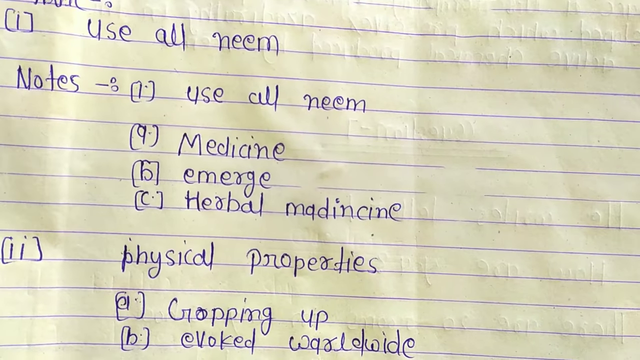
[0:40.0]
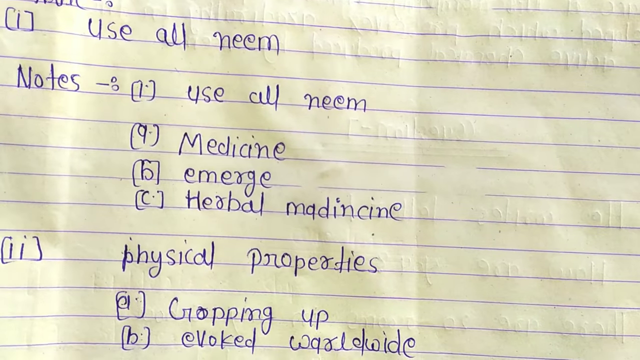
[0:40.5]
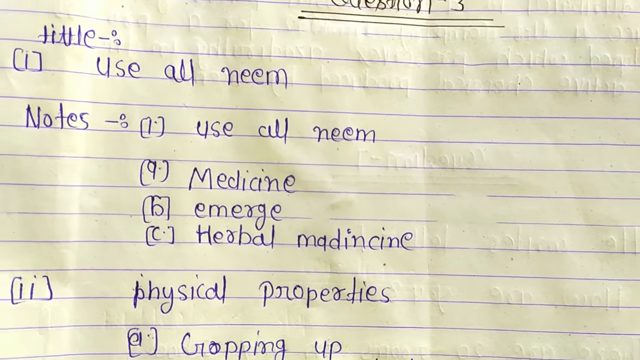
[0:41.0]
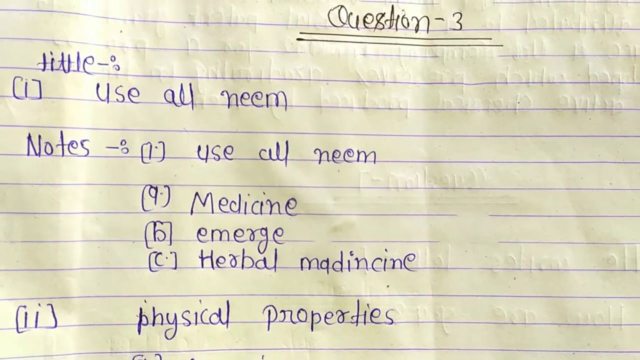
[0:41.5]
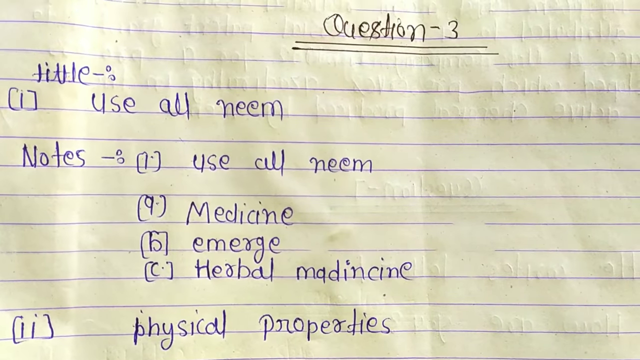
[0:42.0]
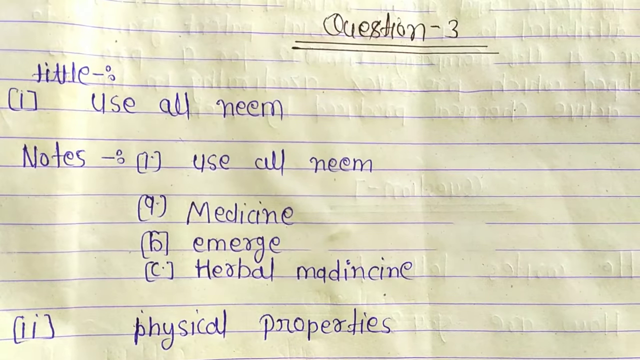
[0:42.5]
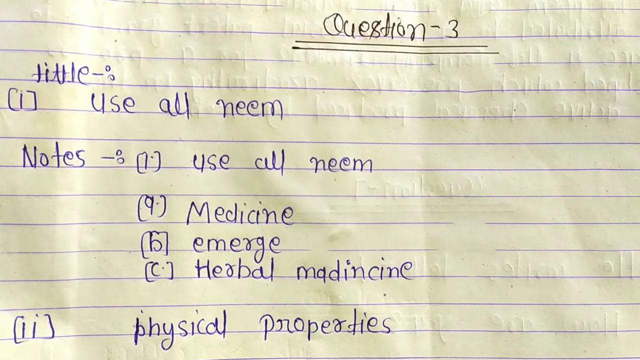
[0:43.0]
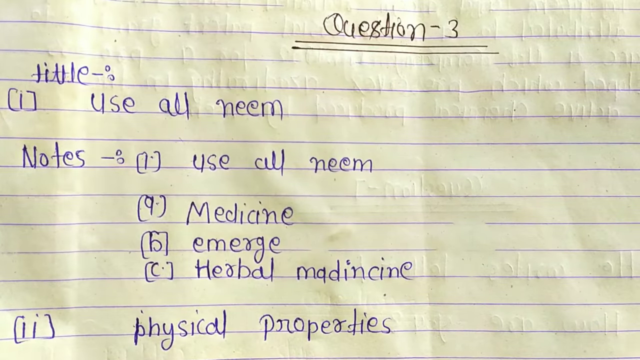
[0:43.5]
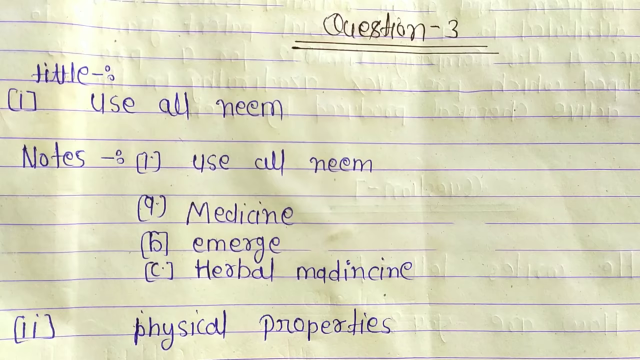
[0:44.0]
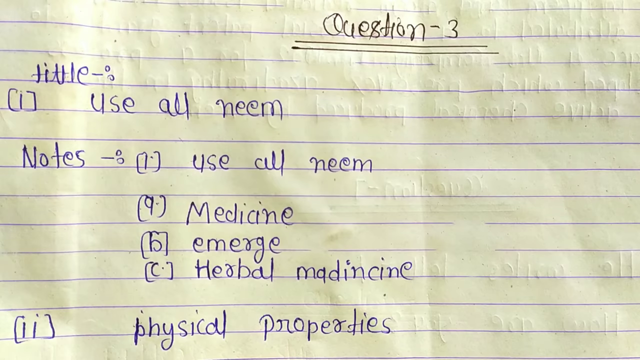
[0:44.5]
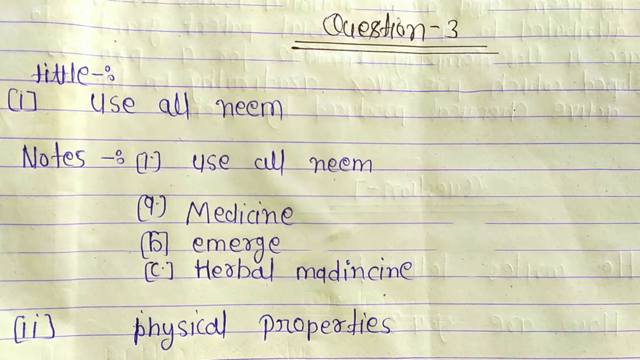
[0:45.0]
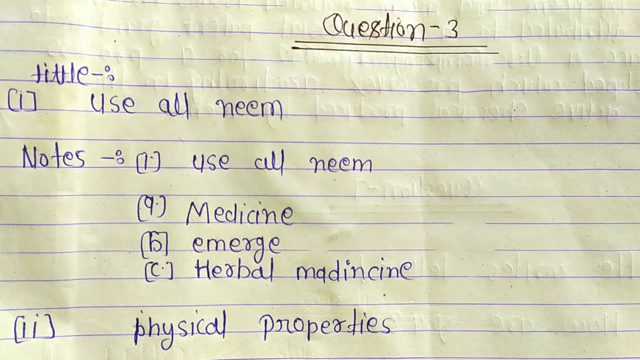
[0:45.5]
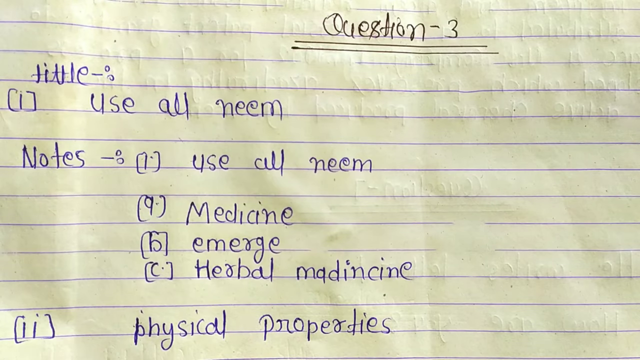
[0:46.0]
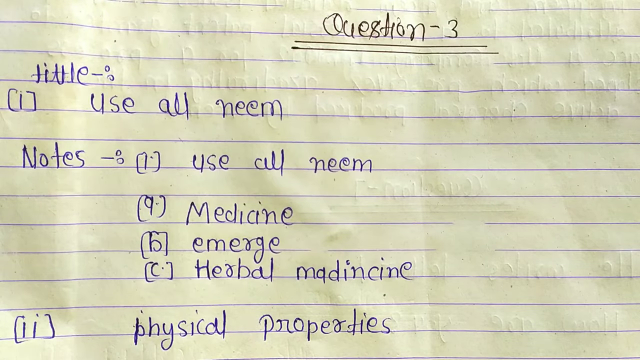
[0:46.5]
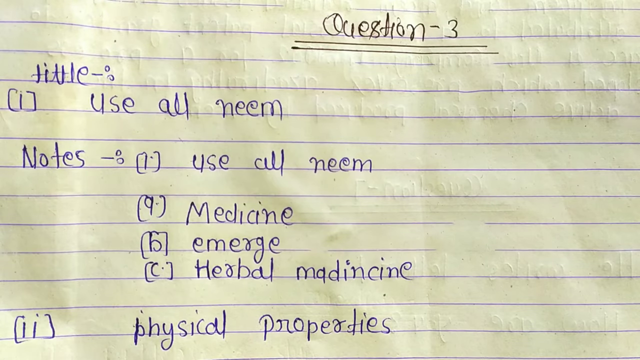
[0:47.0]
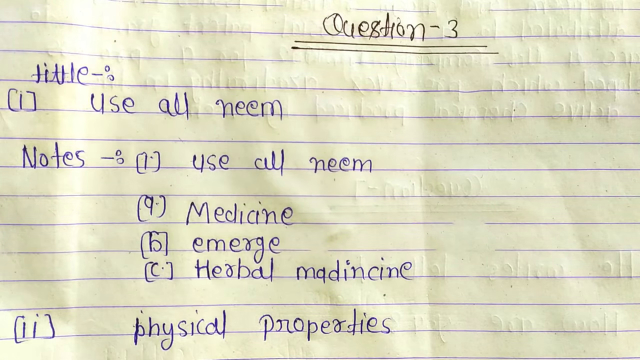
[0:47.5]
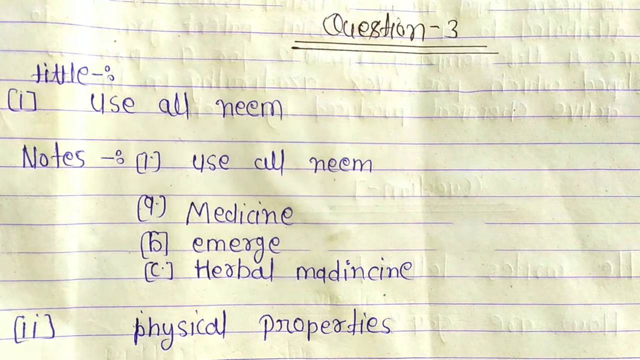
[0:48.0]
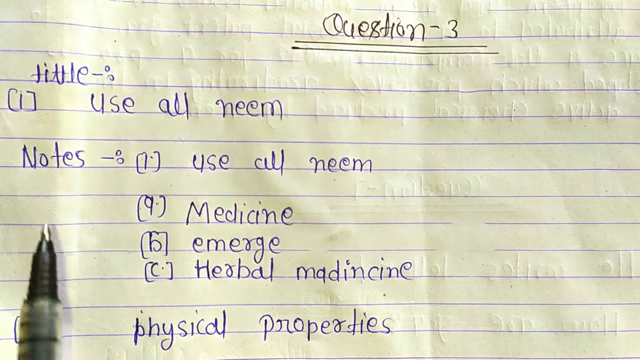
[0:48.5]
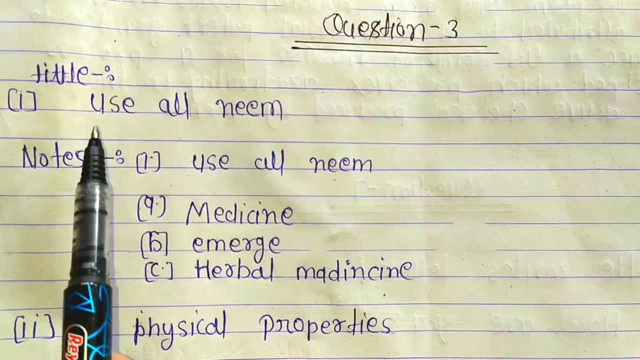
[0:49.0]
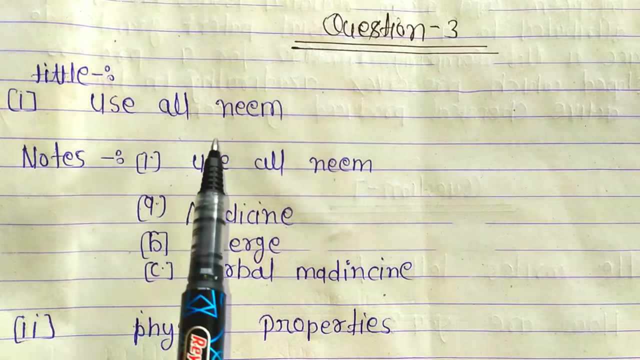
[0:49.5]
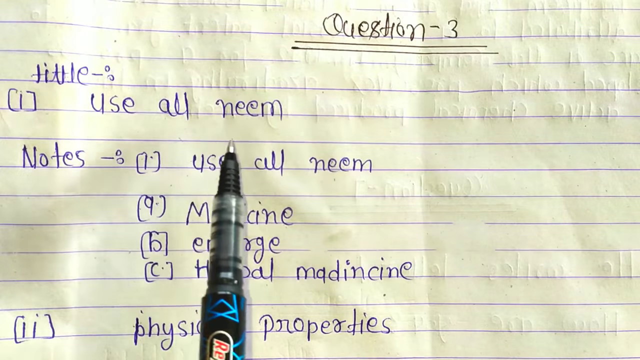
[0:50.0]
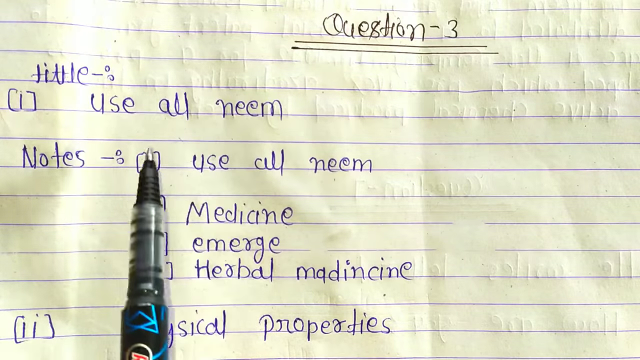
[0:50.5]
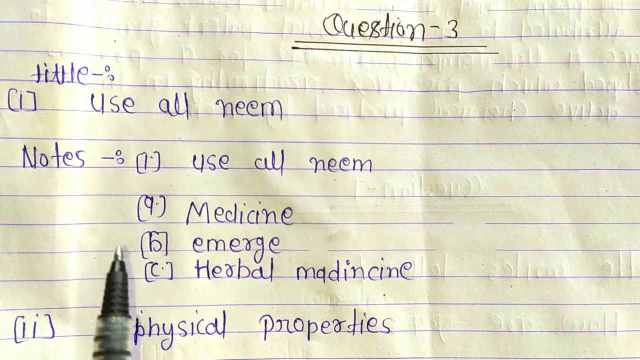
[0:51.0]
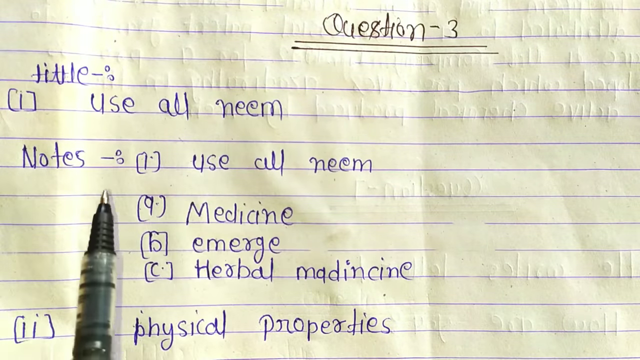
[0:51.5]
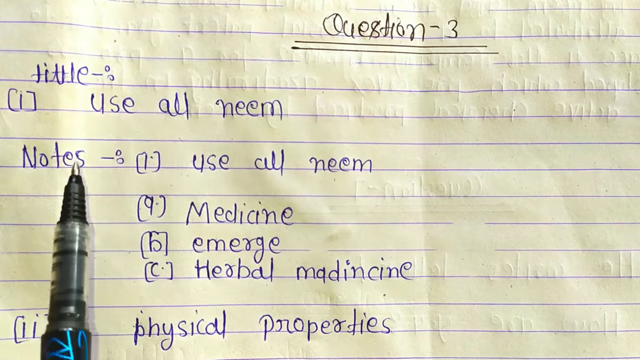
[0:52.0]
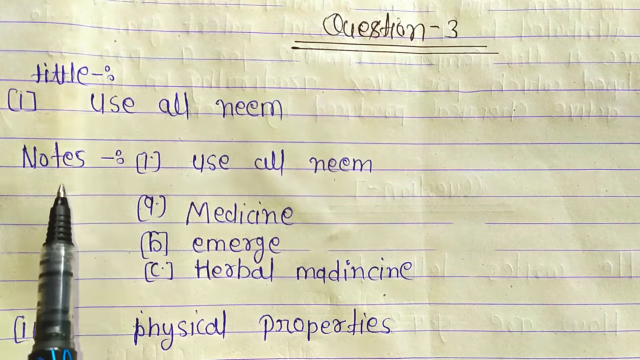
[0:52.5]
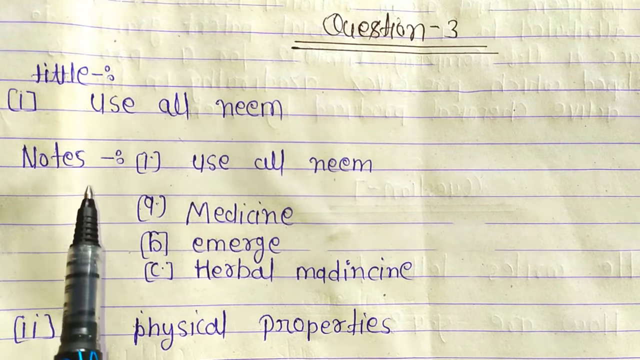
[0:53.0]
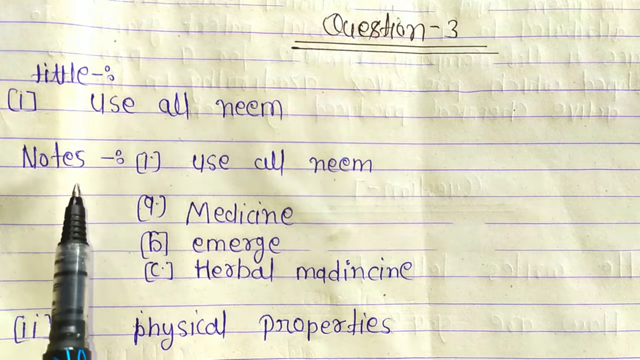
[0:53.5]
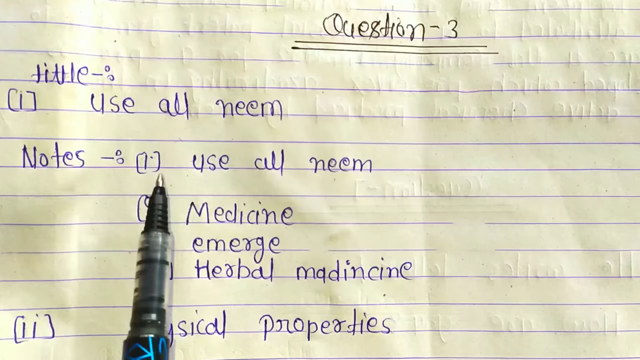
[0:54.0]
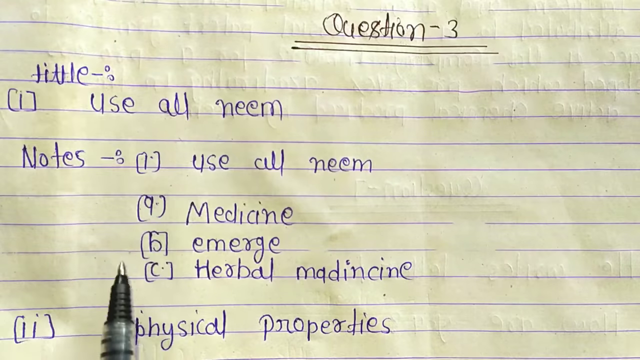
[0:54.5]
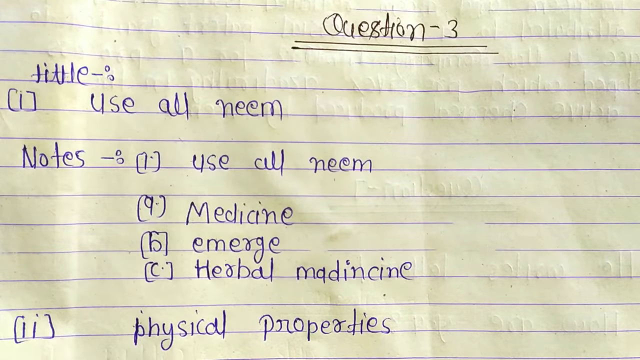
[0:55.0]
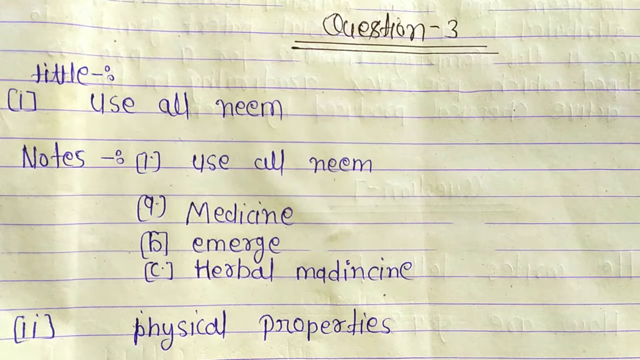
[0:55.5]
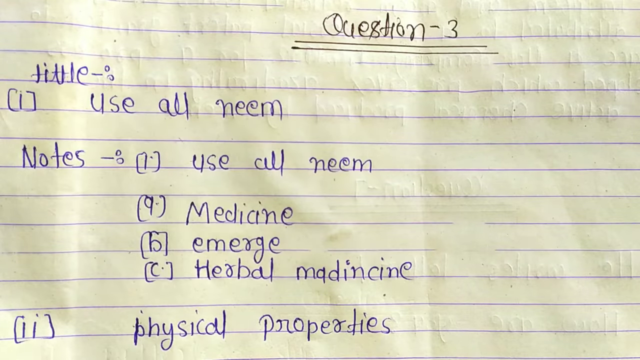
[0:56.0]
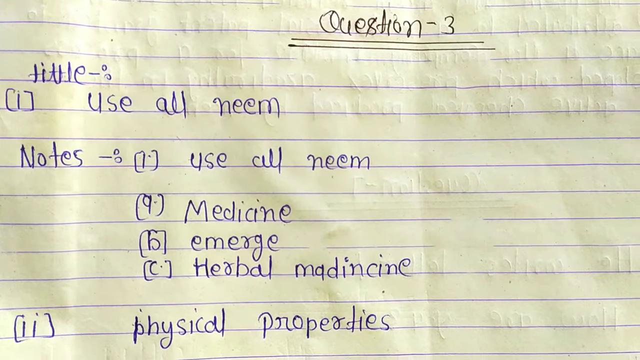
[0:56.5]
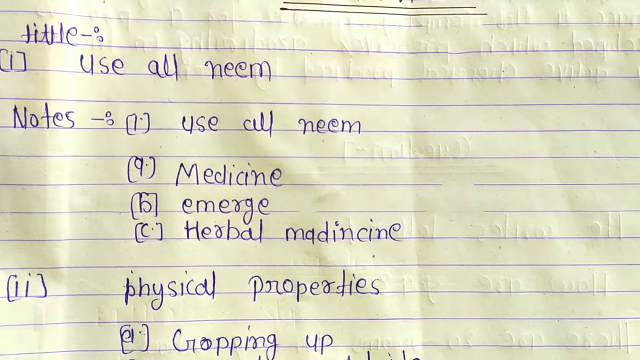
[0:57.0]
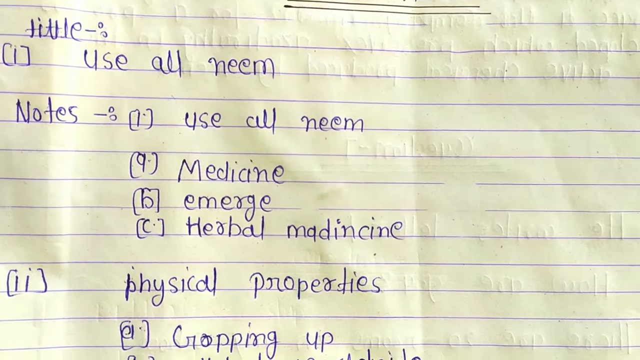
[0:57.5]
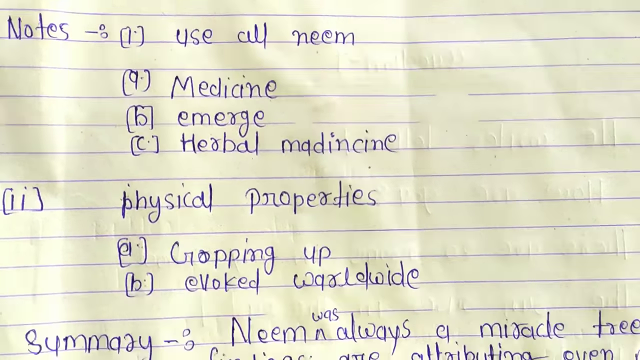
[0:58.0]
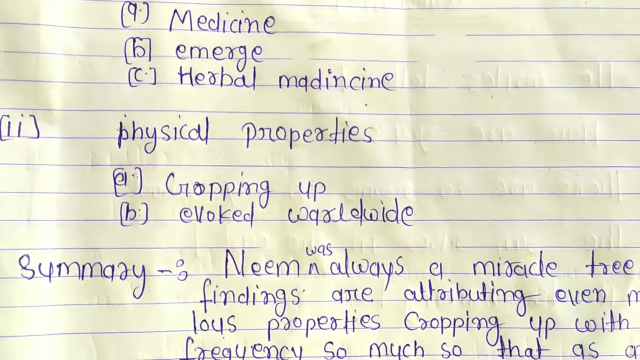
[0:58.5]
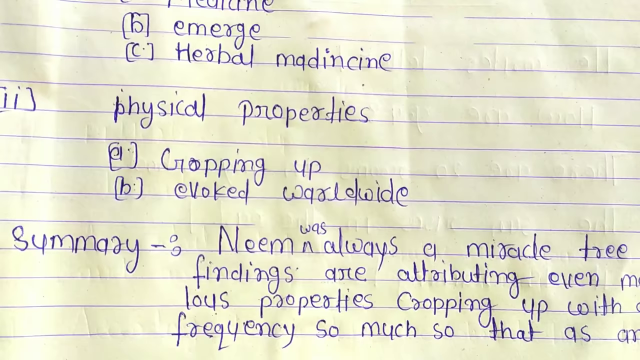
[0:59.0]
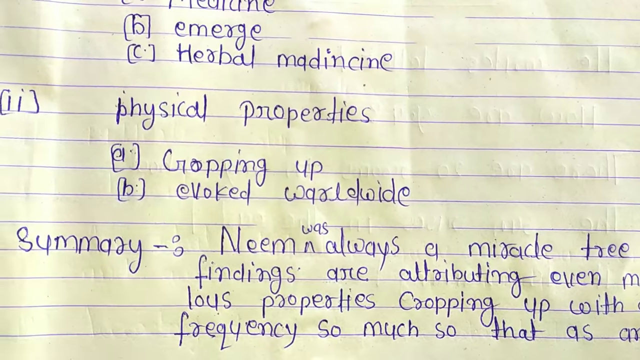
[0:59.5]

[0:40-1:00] The notes read "use or neem", "medicine", "emerge", "herbal", with "medicine" misspelled, "physical properties" and "cropping up". The person moves the paper a little bit down so the earlier text is no longer visible. A black pen appears, and the person looks like they are reading and seems to be pointing. Text then reads "evoked worldwide", followed by "summary" and "Neem was always a miracle tree" and "attributing even more miraculous properties cropping up". The paper moves around a little, then returns to the notes section reading "use or neem", with "a" for medicine and "b" for emergency and herbal medicine.